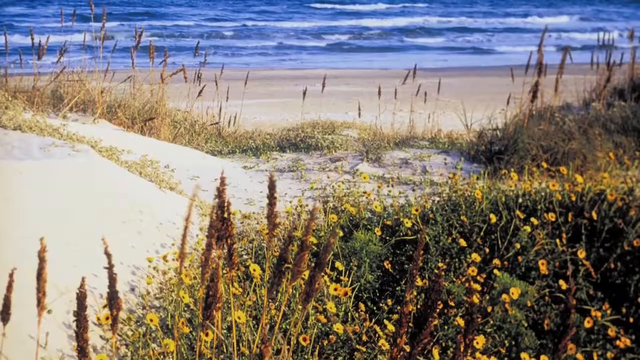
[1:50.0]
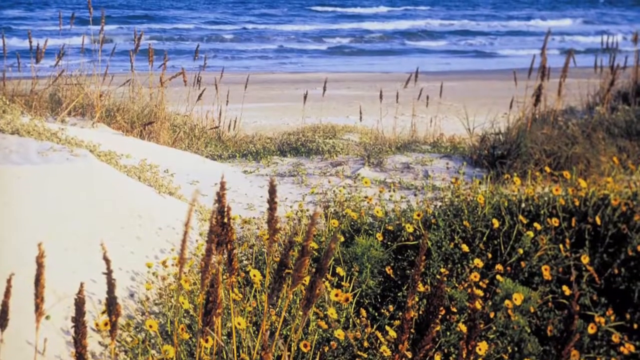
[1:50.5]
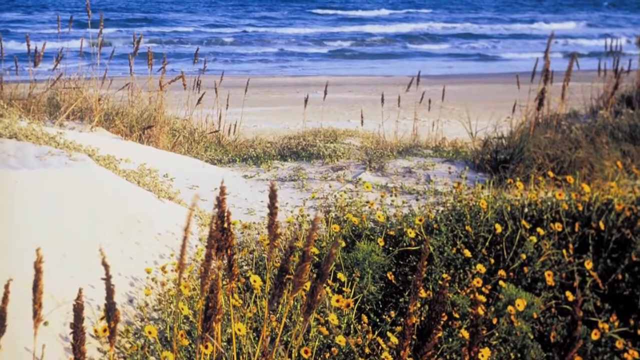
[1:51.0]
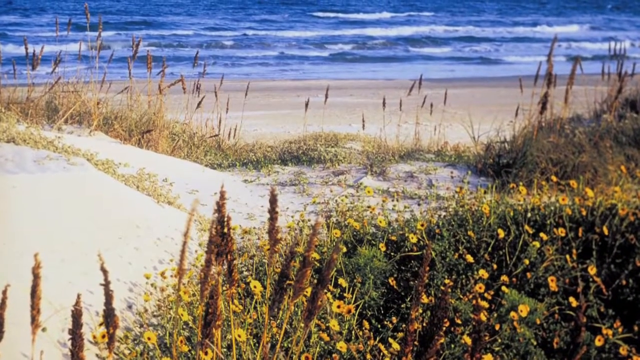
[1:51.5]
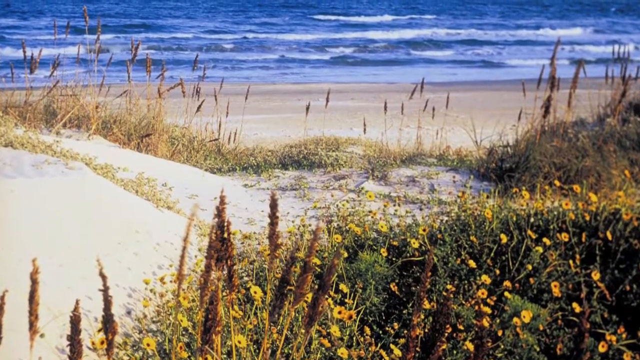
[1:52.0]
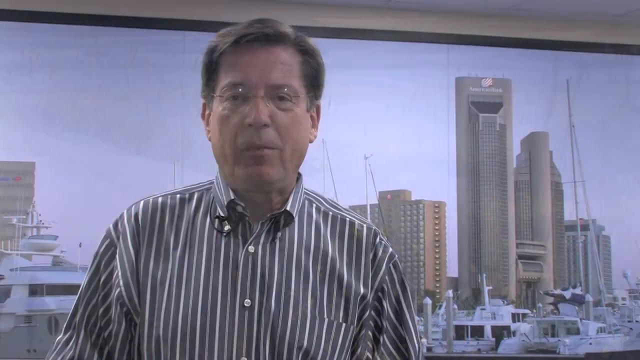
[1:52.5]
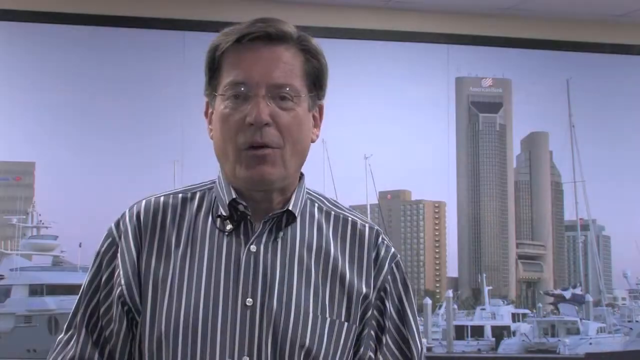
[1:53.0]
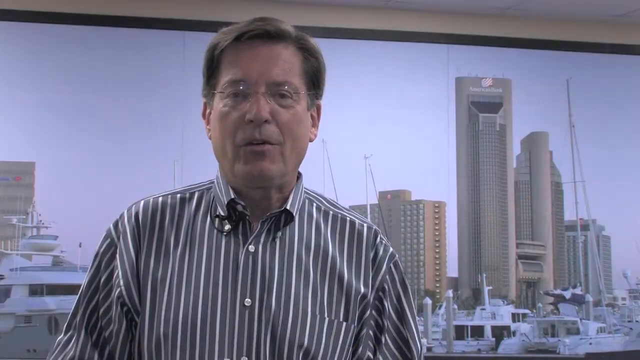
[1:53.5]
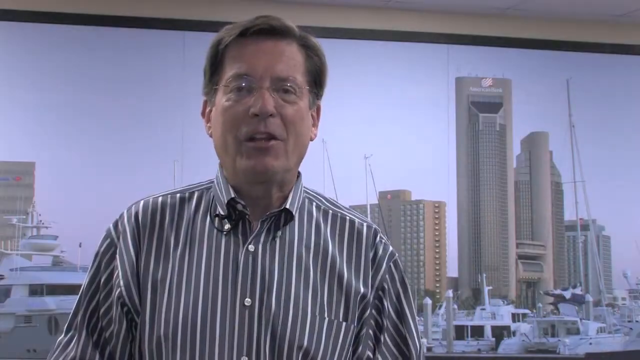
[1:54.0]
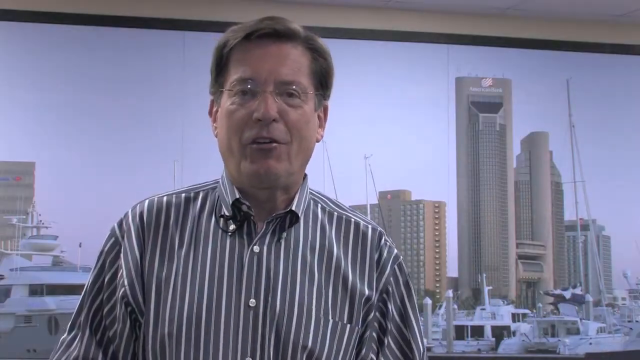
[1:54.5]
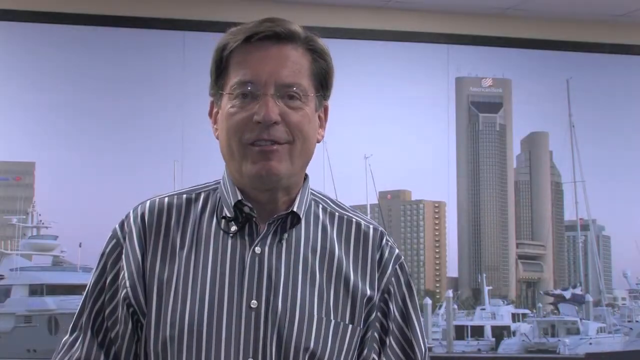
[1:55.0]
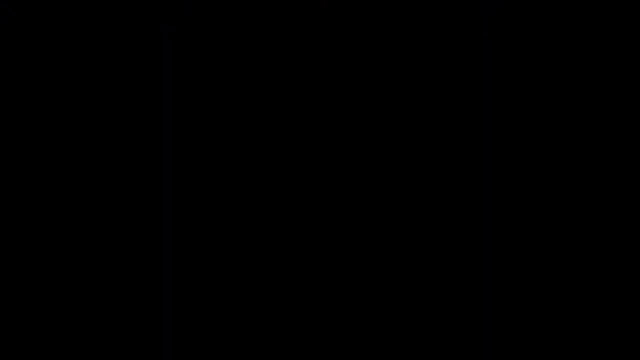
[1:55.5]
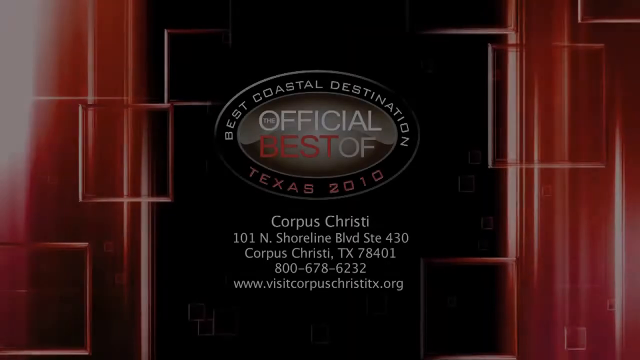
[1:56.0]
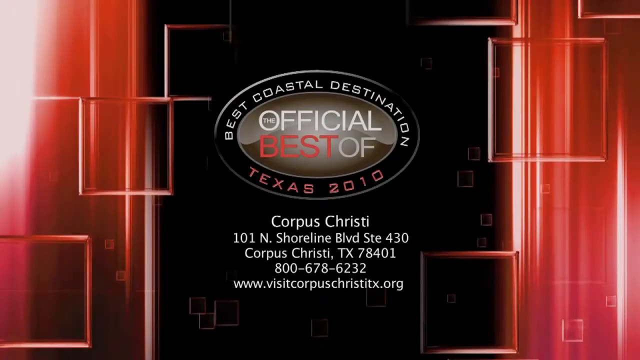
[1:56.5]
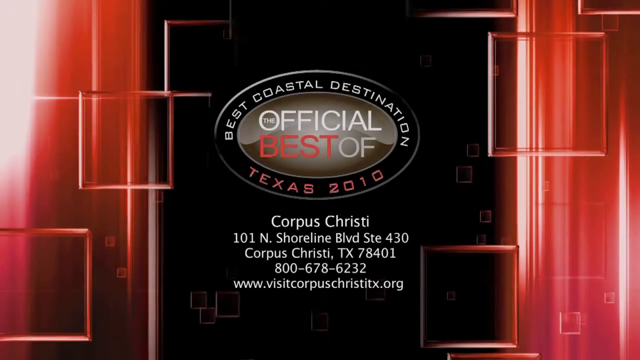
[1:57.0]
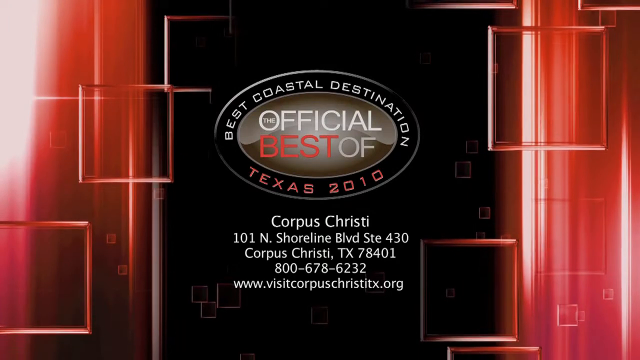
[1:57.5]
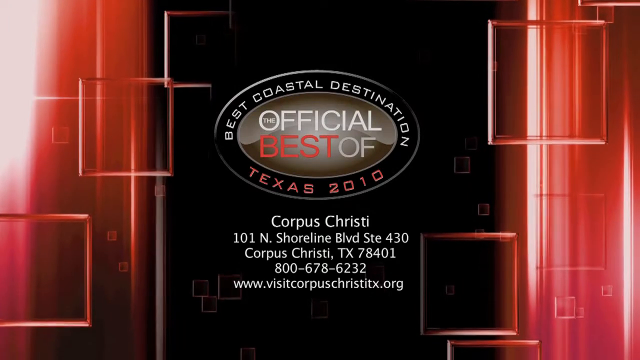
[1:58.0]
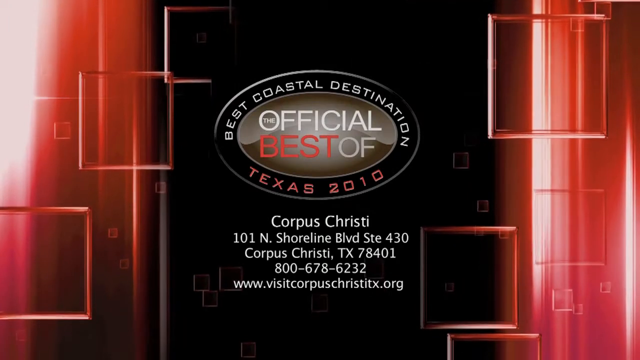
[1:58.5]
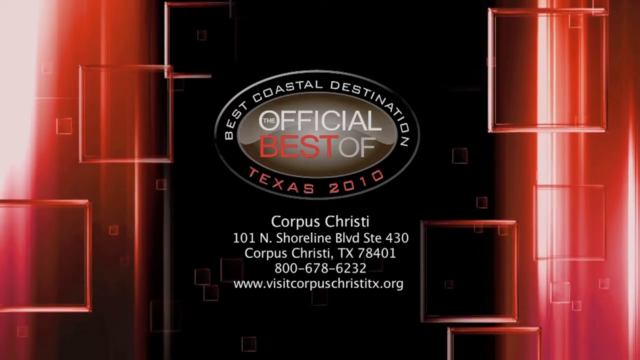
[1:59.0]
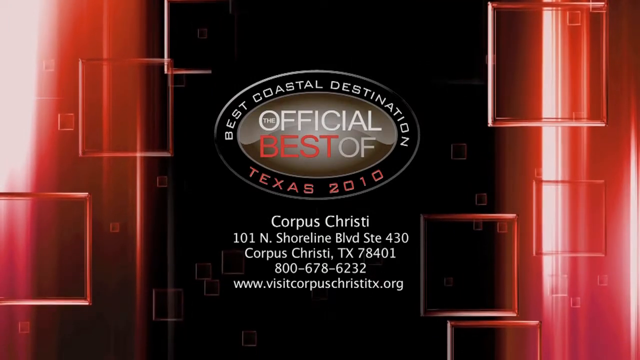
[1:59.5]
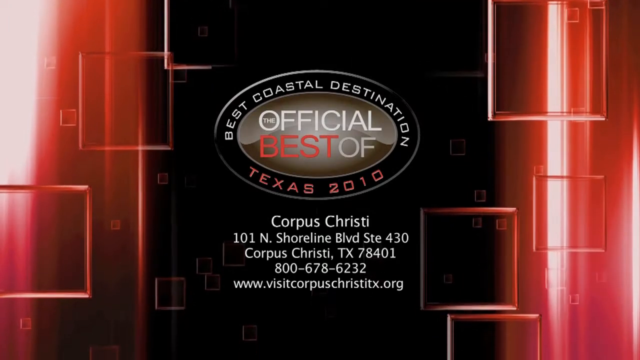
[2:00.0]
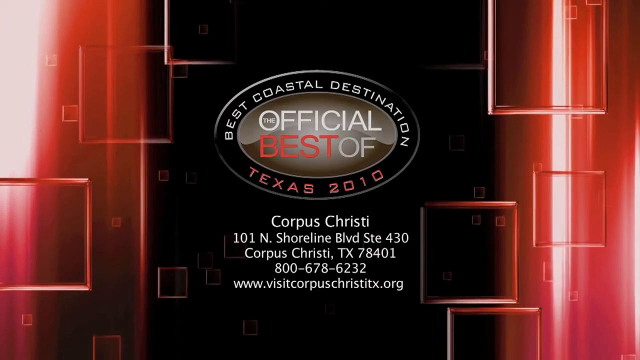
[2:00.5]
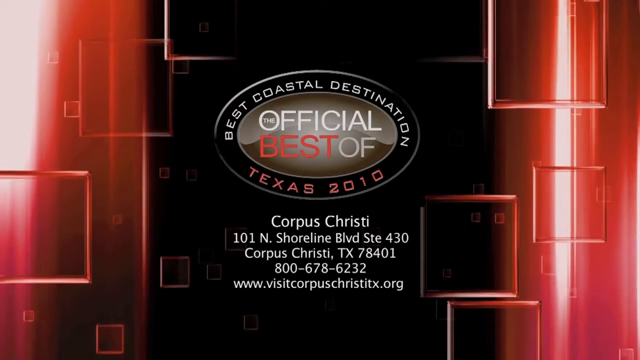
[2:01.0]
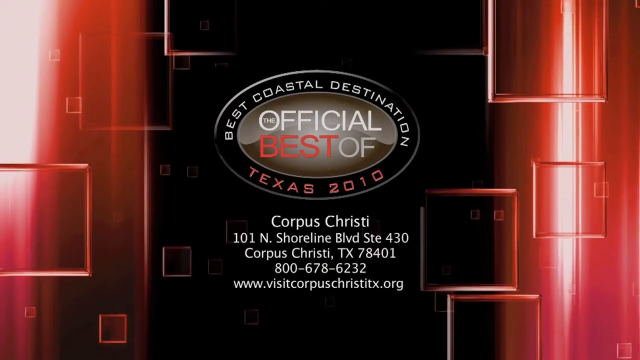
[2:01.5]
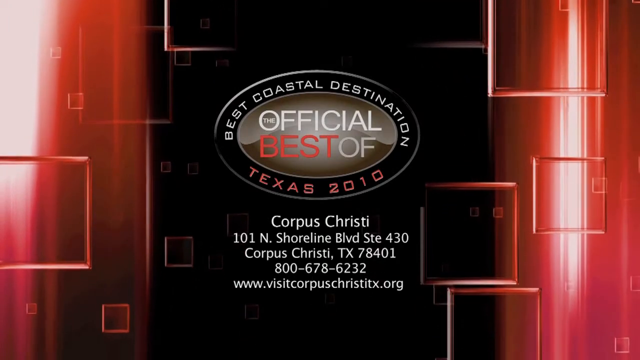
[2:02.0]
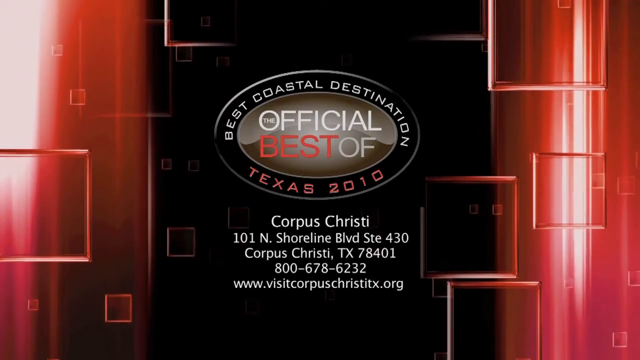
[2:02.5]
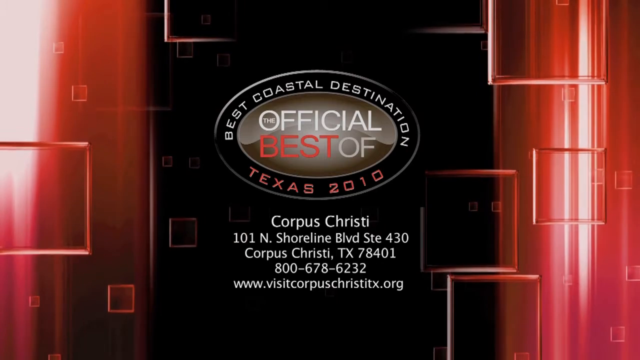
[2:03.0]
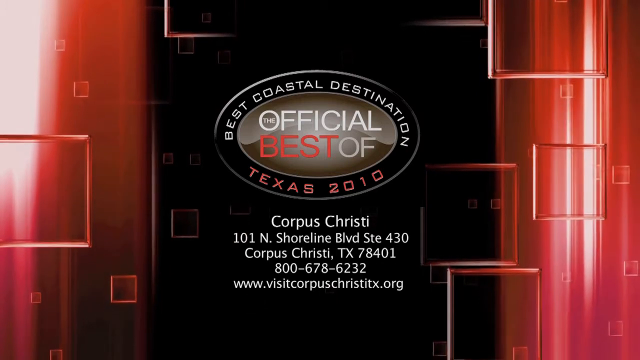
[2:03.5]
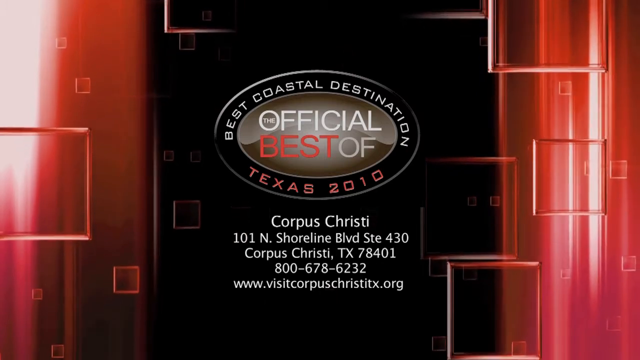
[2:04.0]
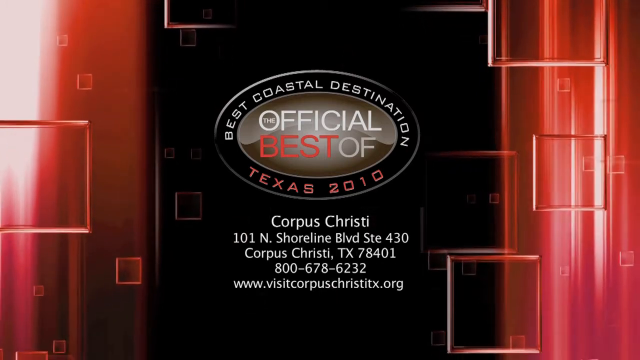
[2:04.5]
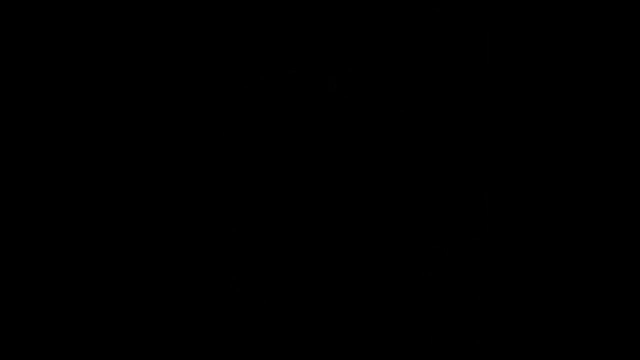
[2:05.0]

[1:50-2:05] A beach has a lot of grass with what look like yellow flowers on it; the grass sort of looks like cattails, spaced kind of far apart. At the top of the screen, blue ocean waves are crashing in. The scene switches to a man standing in front of a picture of a cityscape. In the foreground of the picture, at the bottom of the screen, are a bunch of white boats with their masts up but no sails; behind them are some large, tall buildings and a blue sky. The man wears glasses and faces the camera. He is talking, blinks, and nods his head up and down. Then a screen appears that is black in the middle and red on the left and right sides, with an oval in the center. Across the top of the oval, white letters read "Best Coastal Destinations". Below that it reads "Official Best Of", with "Official" and "Of" in white letters and "Best" in red letters. Below that, "Texas 2010" is in red. Below that, white letters read "Corpus Christi 101 and Shoreline Boulevard, STE 430, Corpus Christi, Texas 78401", followed by the phone number "800-678-6232" and the website "www.visitcorpuschristix.org".